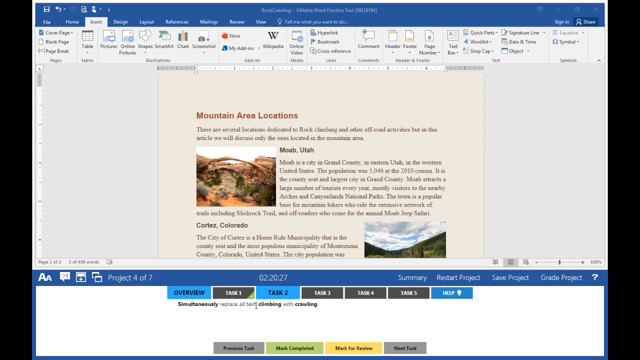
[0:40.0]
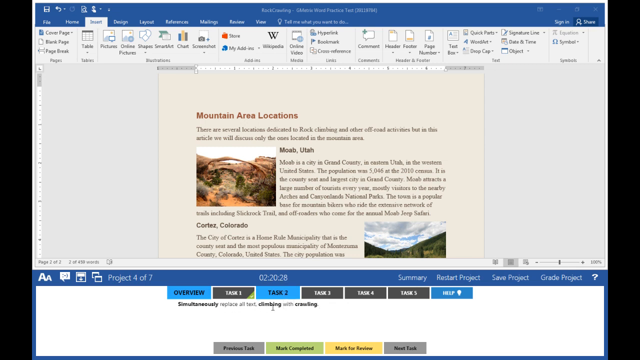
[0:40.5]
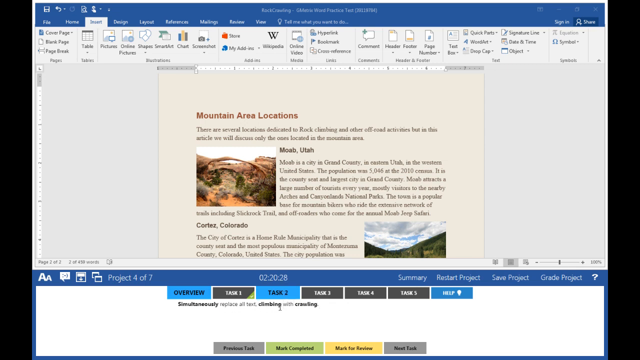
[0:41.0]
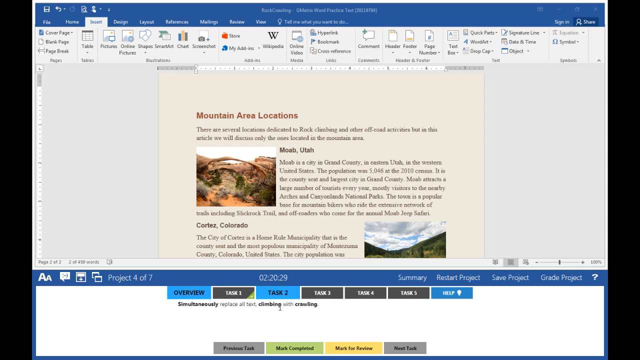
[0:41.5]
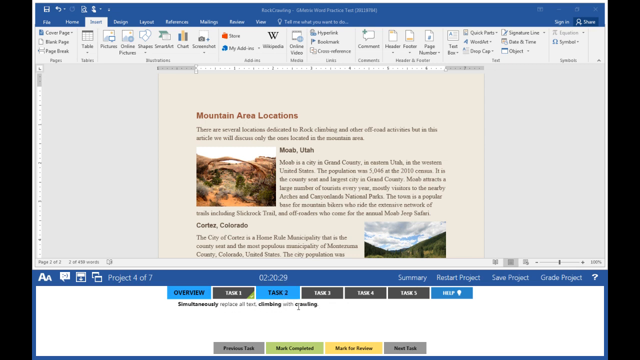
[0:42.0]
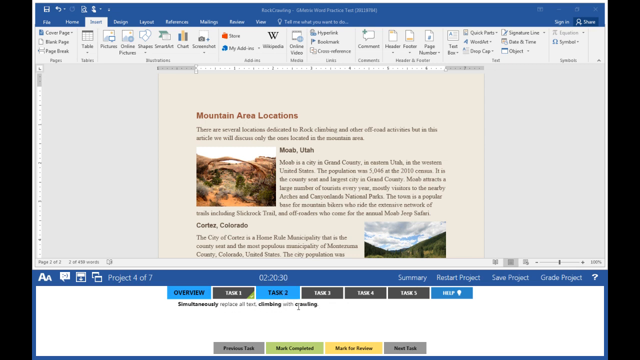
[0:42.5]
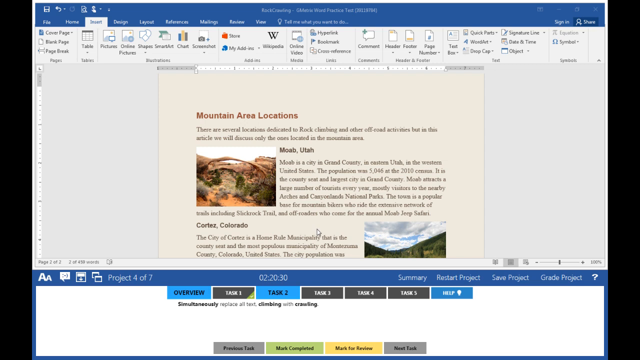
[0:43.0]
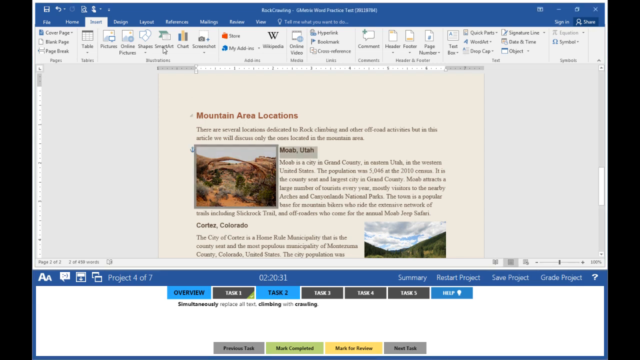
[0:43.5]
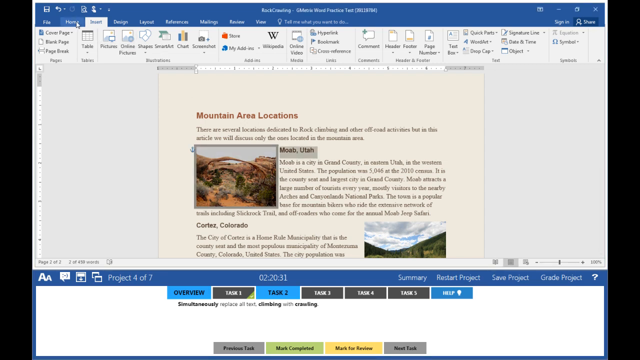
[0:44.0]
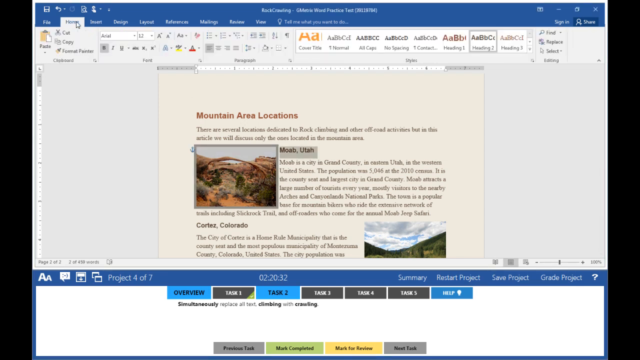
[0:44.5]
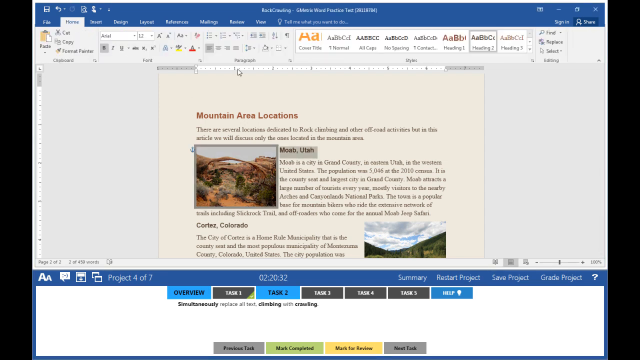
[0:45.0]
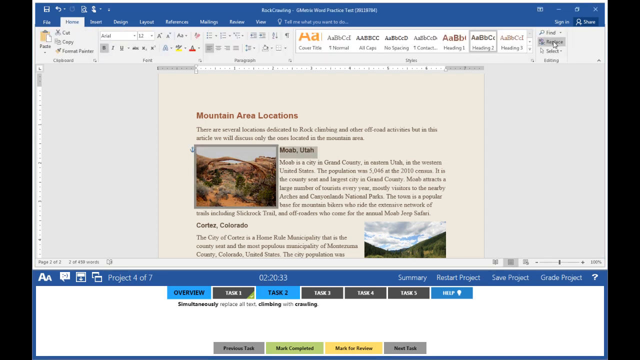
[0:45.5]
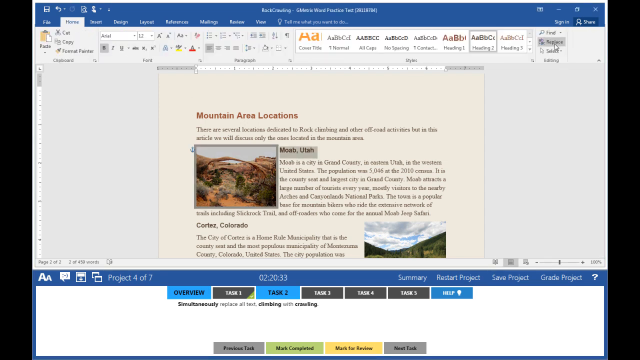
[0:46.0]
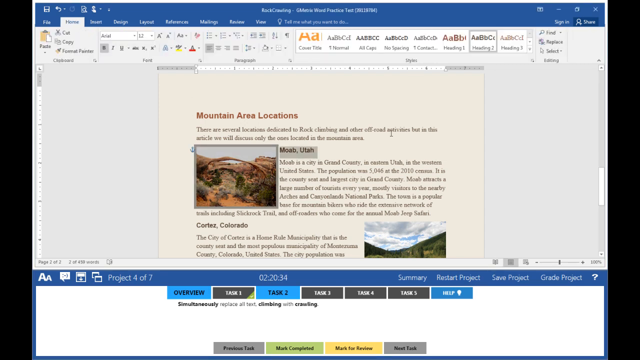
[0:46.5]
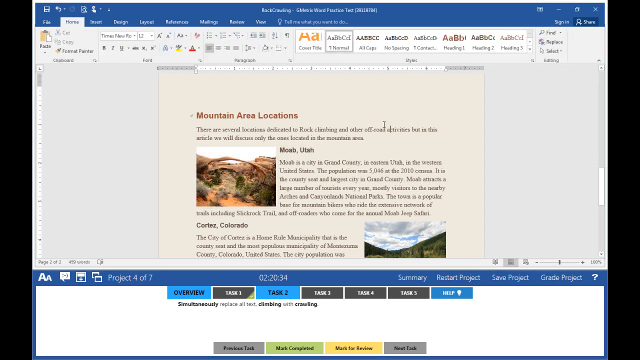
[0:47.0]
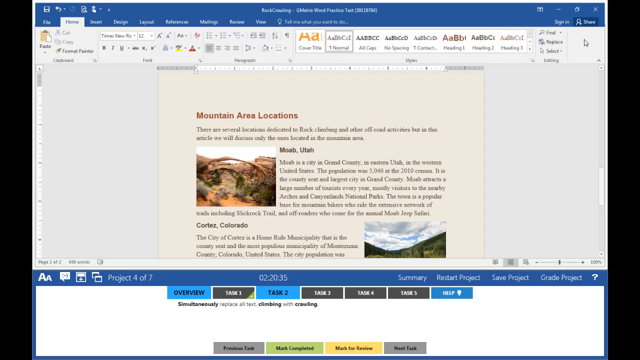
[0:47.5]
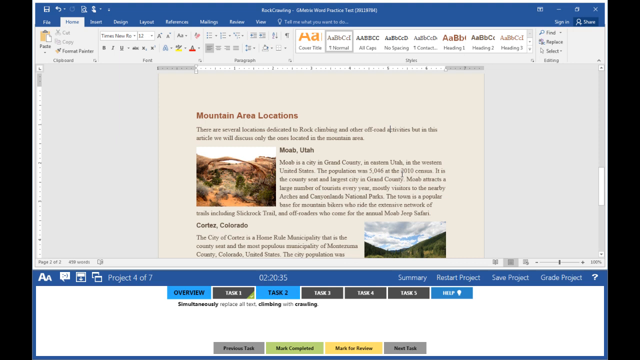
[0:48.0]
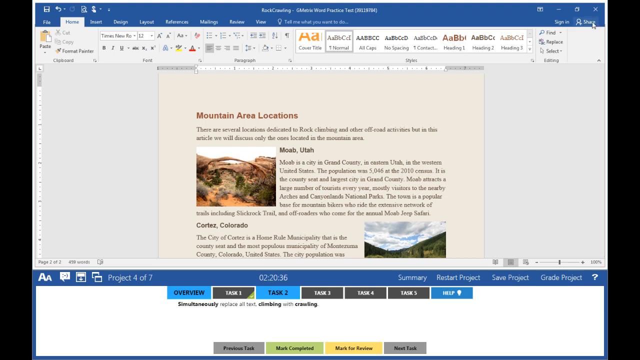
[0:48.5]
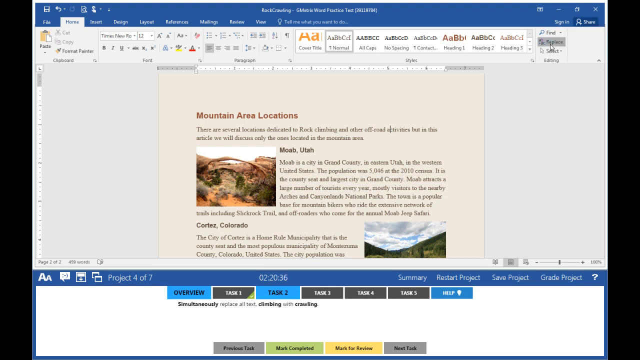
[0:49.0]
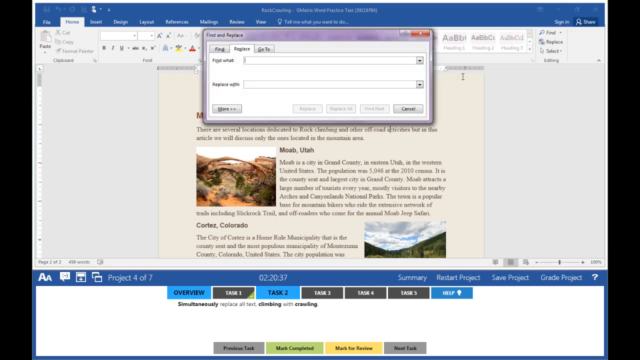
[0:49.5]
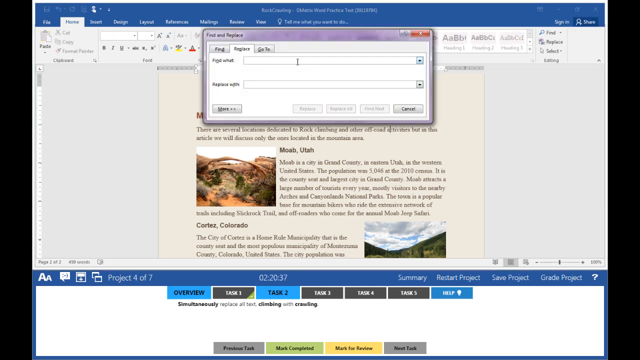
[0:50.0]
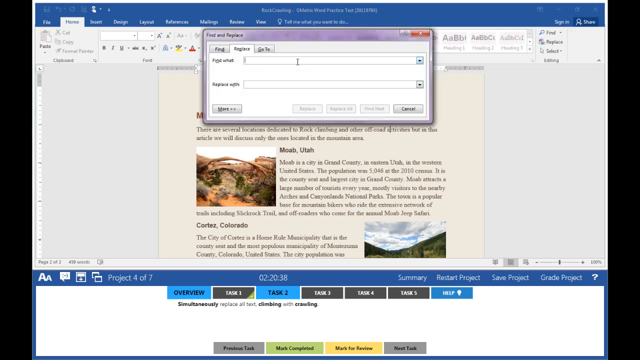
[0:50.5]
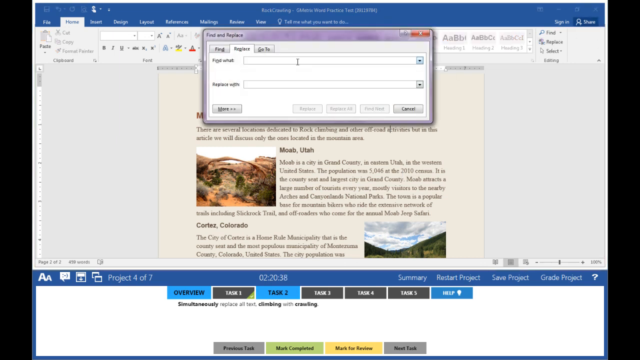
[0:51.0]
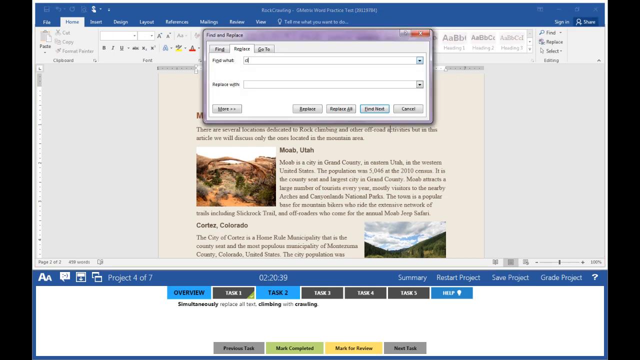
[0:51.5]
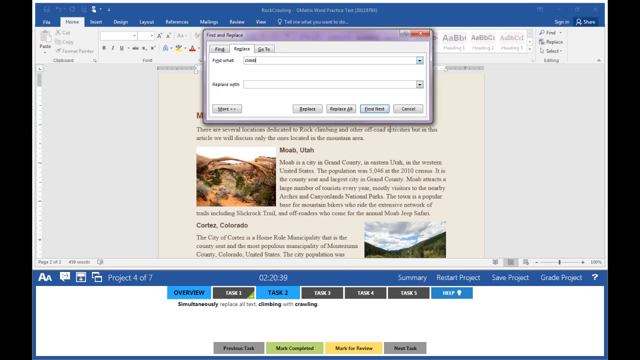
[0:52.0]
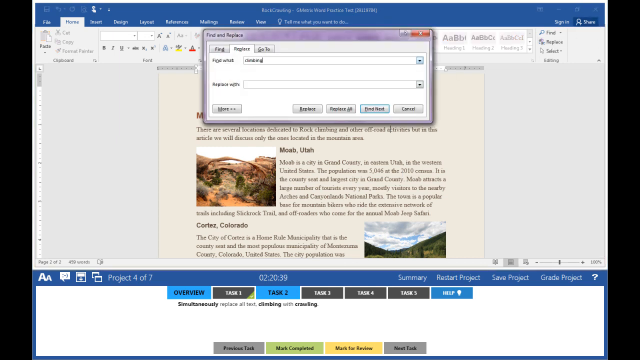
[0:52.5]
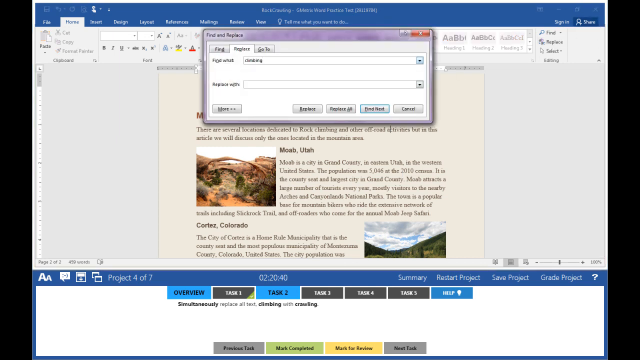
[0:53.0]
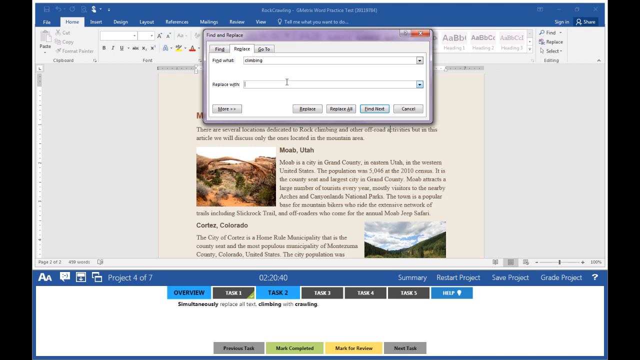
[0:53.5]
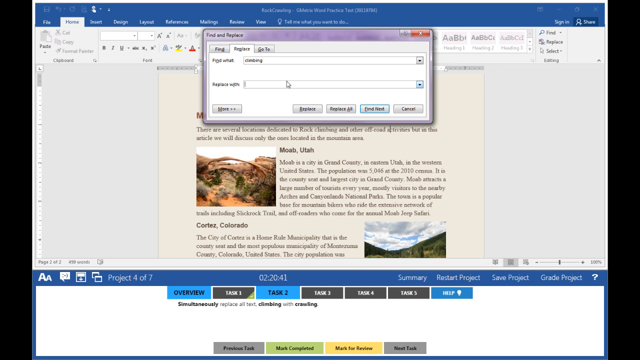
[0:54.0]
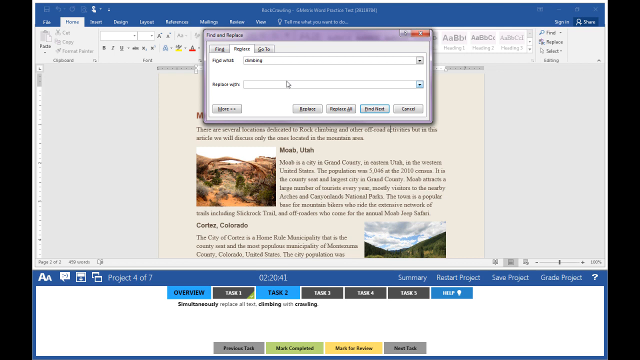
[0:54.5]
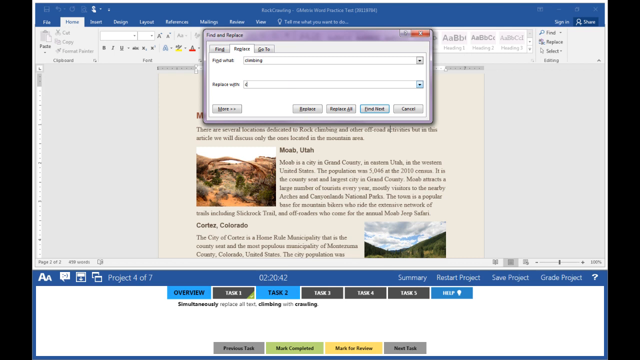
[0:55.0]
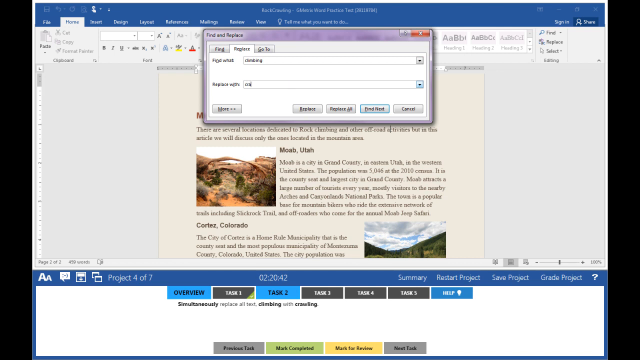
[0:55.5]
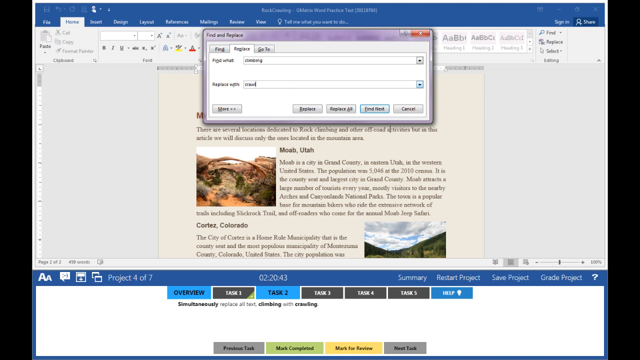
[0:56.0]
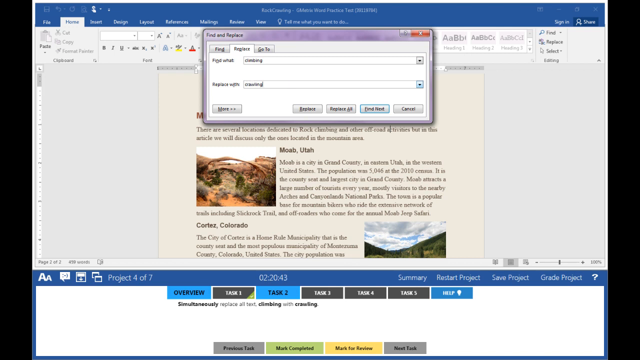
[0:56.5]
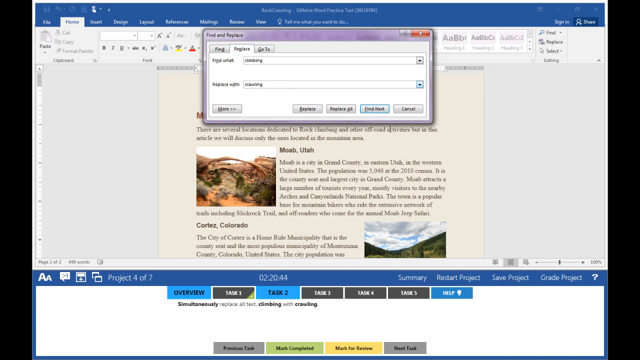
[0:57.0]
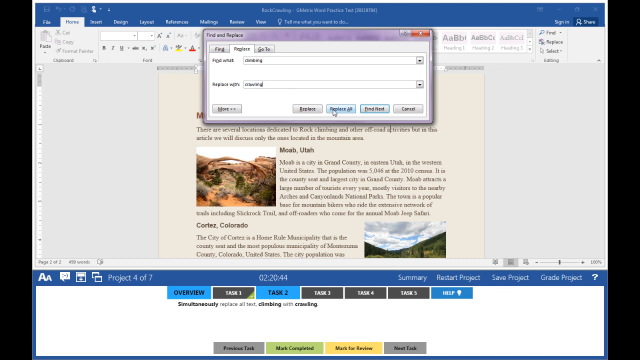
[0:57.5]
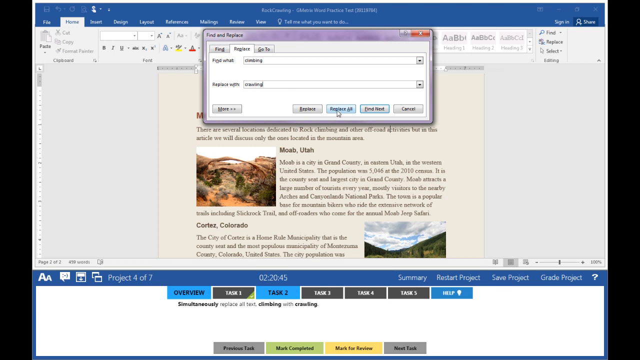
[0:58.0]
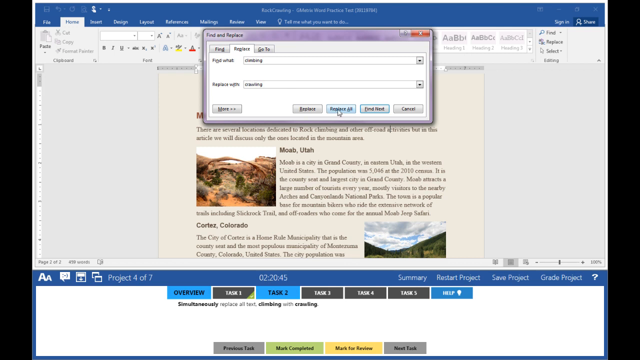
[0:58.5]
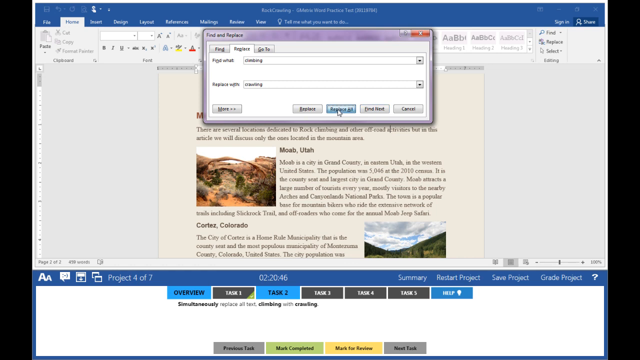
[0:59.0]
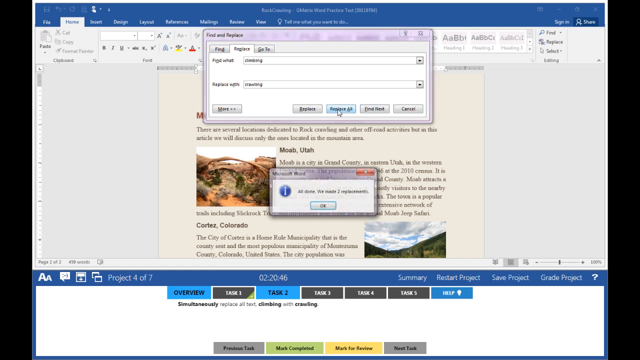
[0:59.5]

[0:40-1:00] Someone looks at a Word document about travel in Utah and Cortez, Colorado, and Moab, Utah. At the top it says it is a practice test about rock crawling, which the document describes as taking 4x4s and Jeeps at a very slow speed up and down rocks and foothills. The cursor moves to the bottom, where "Project 4 of 7" appears below the document about Moab and Cortez. The cursor moves around and goes back to Moab, Utah, highlighting it and a picture. It then goes to Home and clicks Replace; they type "climbing" and a replacement word that cannot be read, then save. The bottom part, labeled "Project 4 of 7," has five task tabs and says "simultaneously replace all text climbing with crawling."